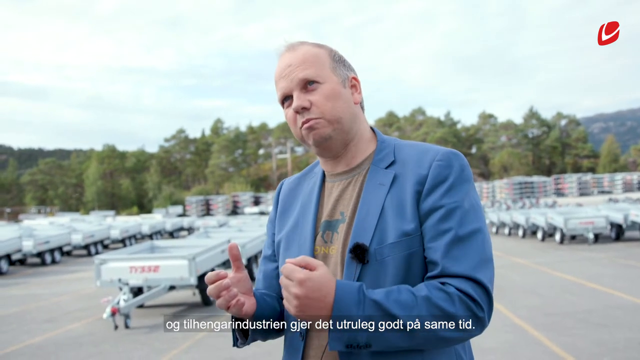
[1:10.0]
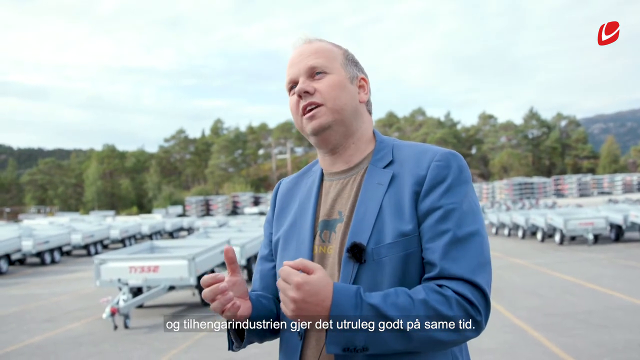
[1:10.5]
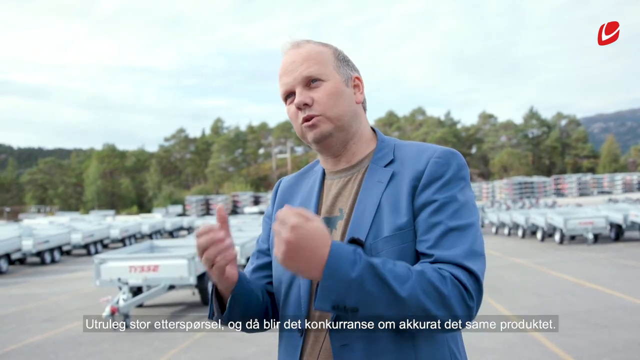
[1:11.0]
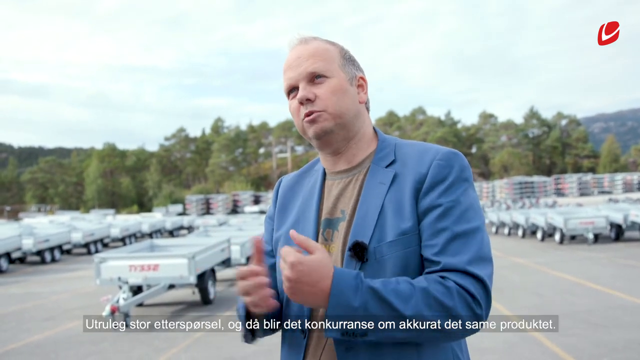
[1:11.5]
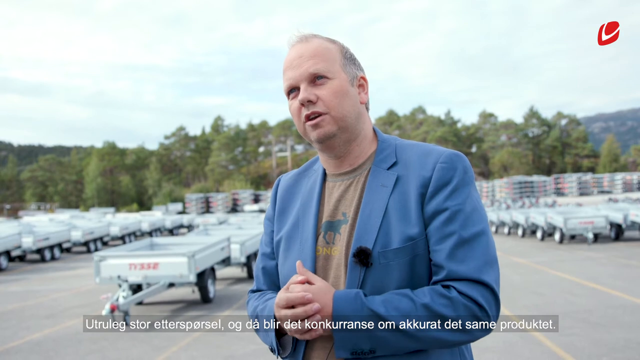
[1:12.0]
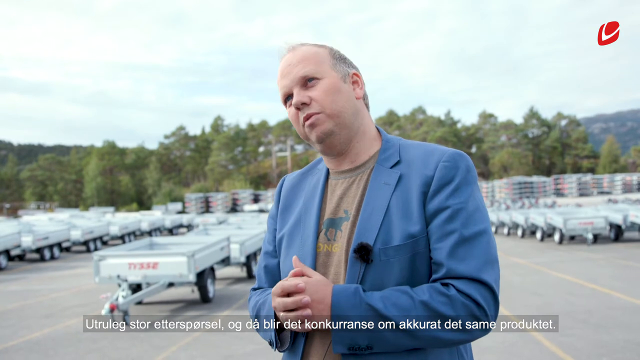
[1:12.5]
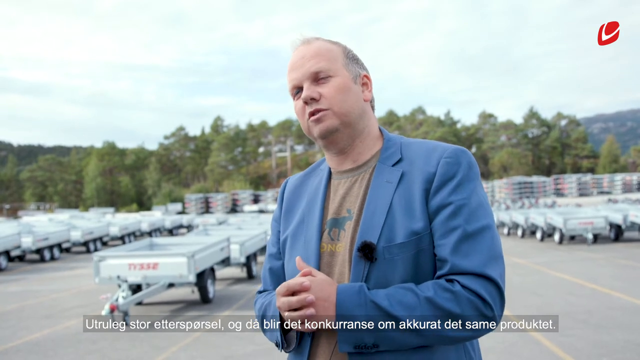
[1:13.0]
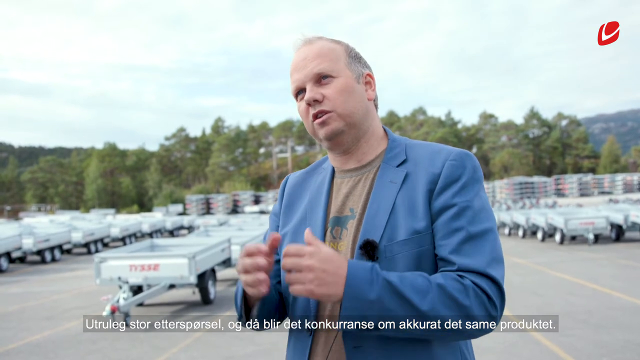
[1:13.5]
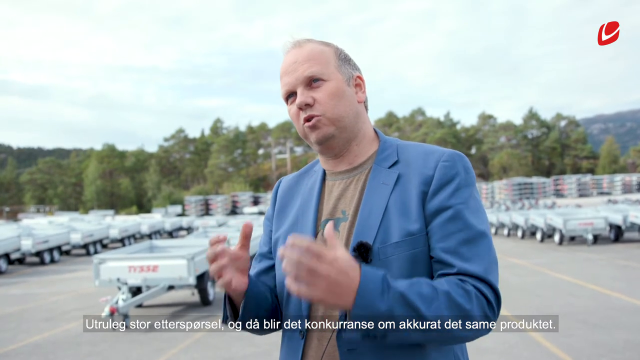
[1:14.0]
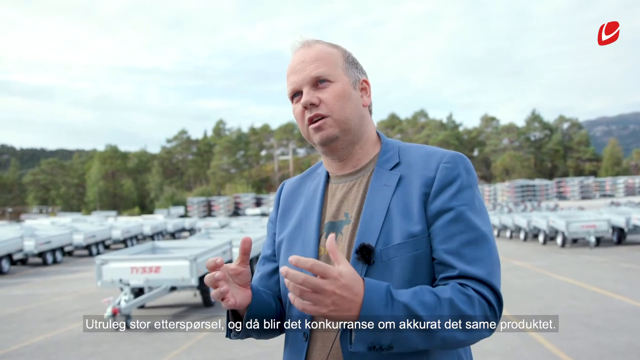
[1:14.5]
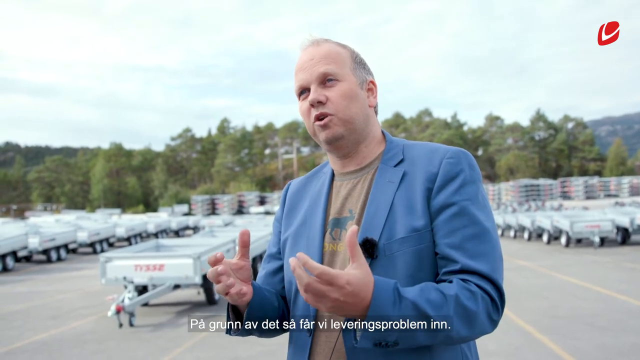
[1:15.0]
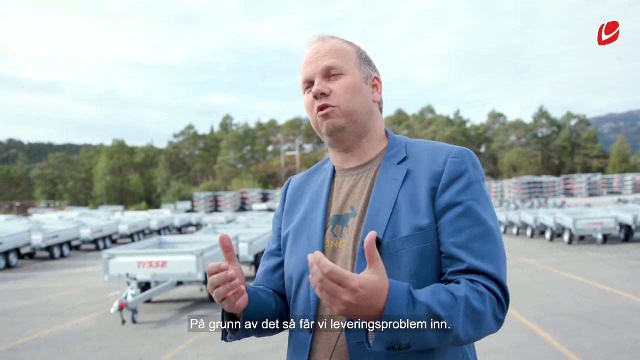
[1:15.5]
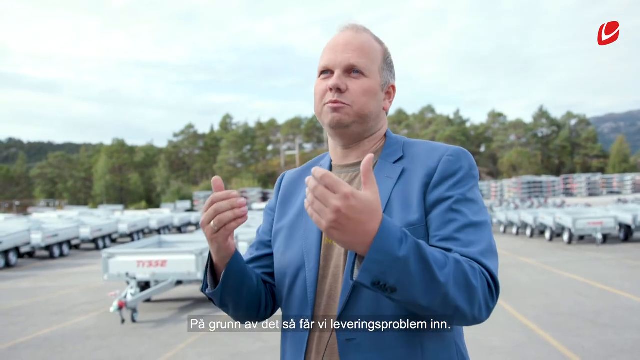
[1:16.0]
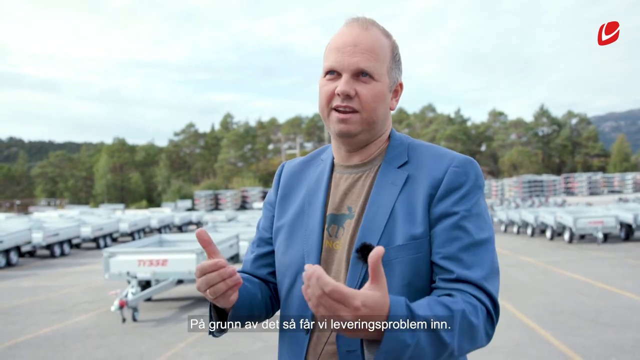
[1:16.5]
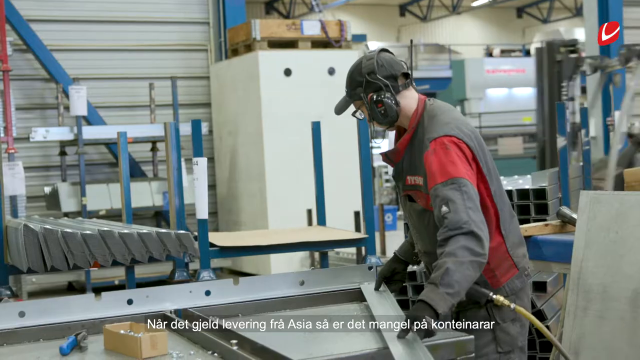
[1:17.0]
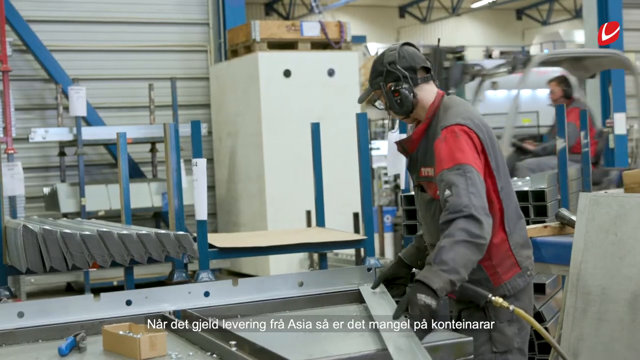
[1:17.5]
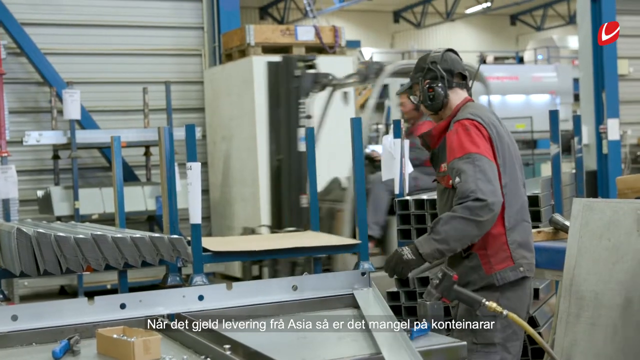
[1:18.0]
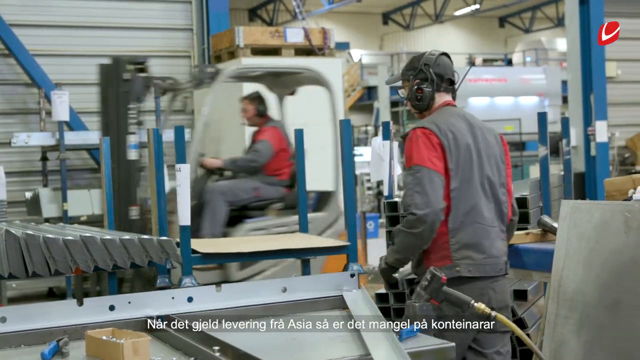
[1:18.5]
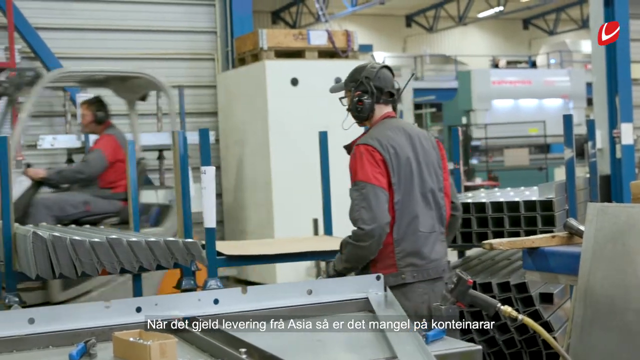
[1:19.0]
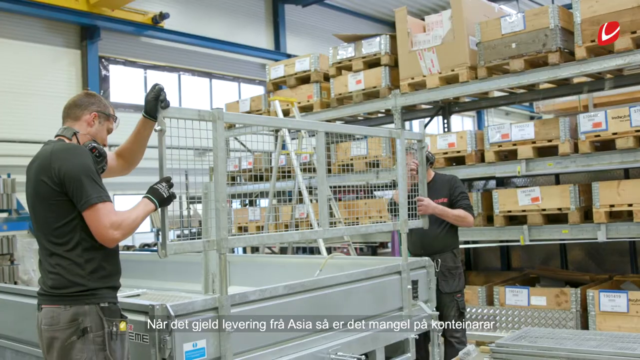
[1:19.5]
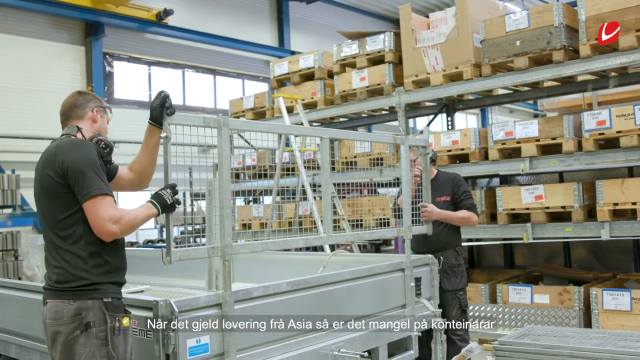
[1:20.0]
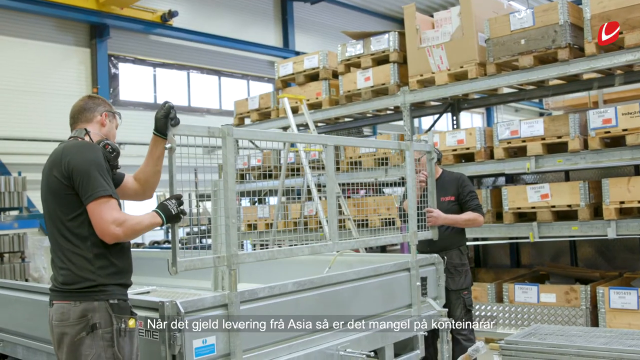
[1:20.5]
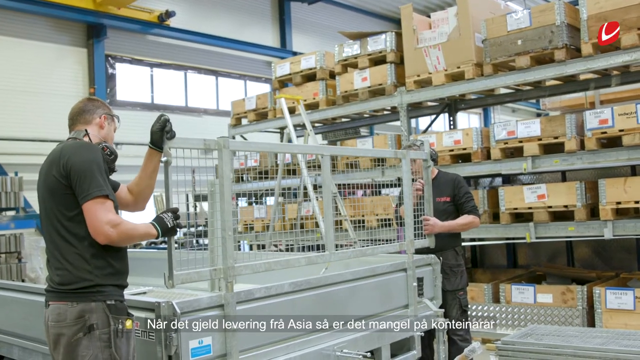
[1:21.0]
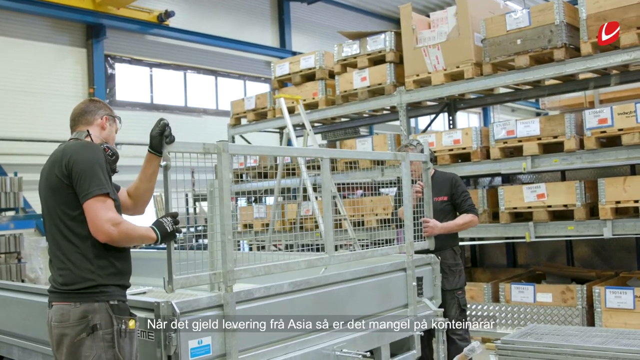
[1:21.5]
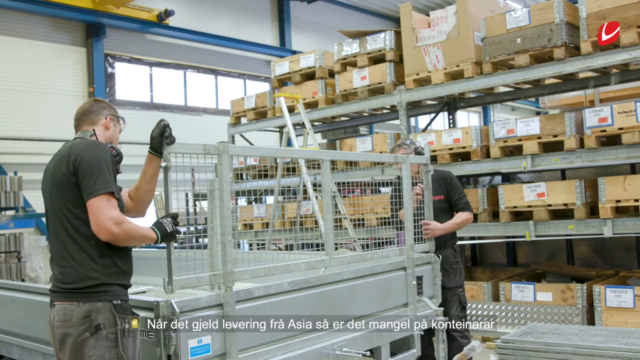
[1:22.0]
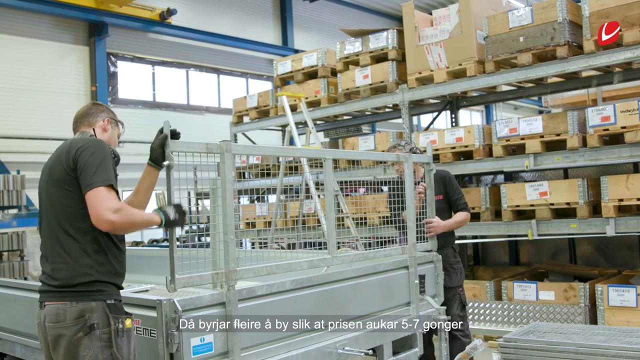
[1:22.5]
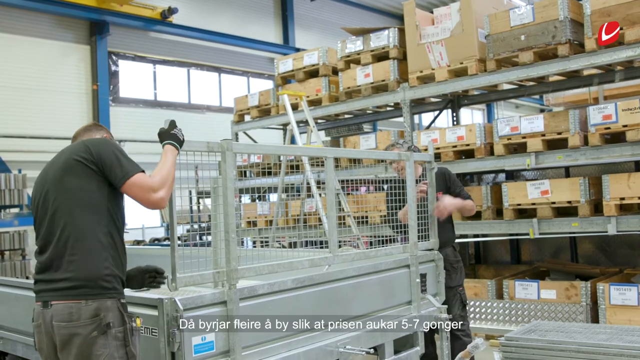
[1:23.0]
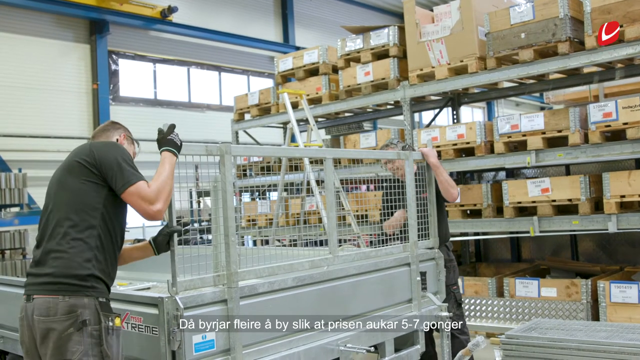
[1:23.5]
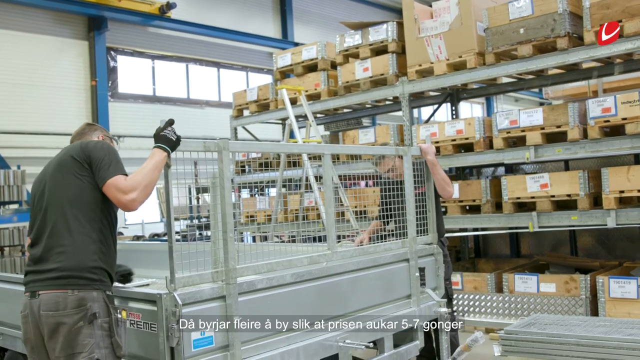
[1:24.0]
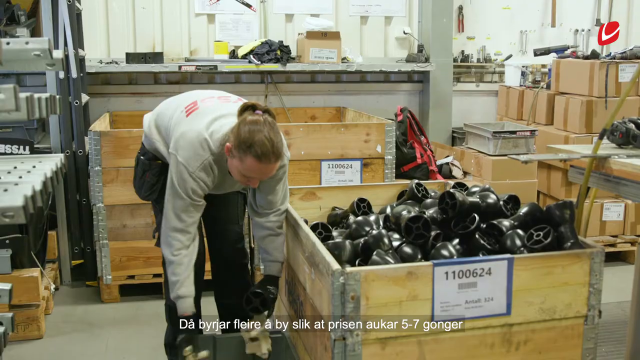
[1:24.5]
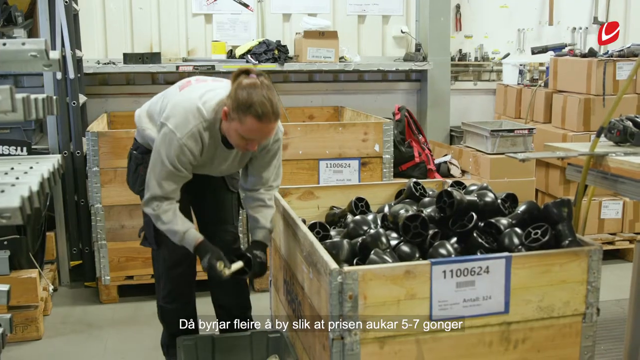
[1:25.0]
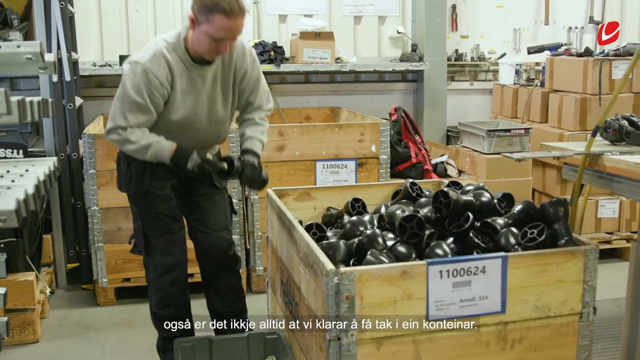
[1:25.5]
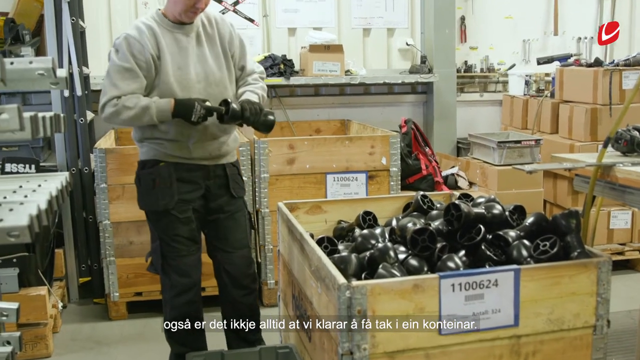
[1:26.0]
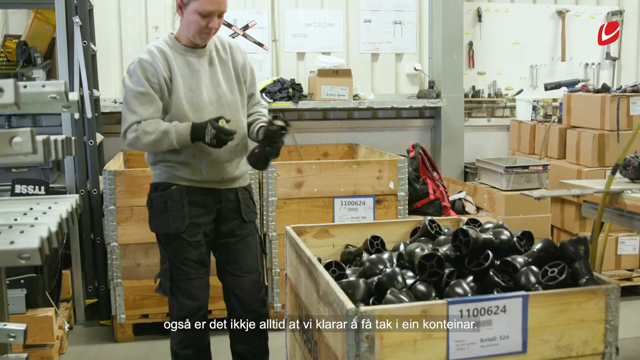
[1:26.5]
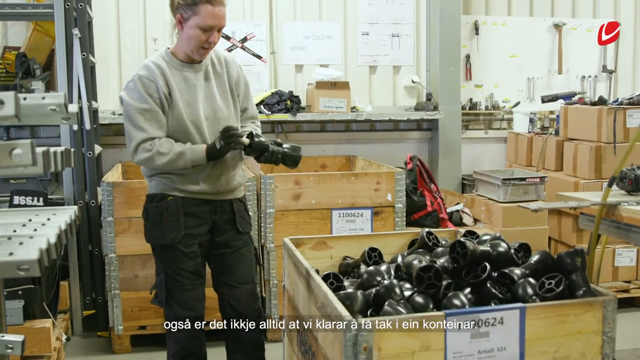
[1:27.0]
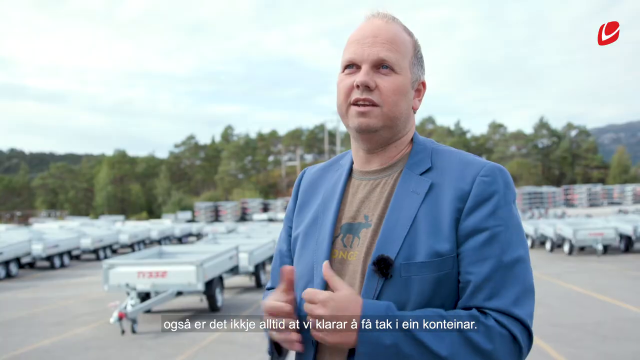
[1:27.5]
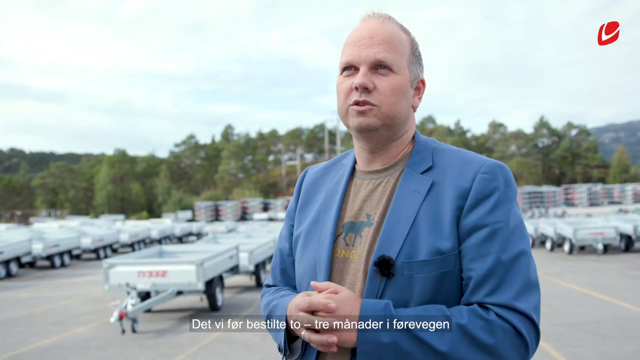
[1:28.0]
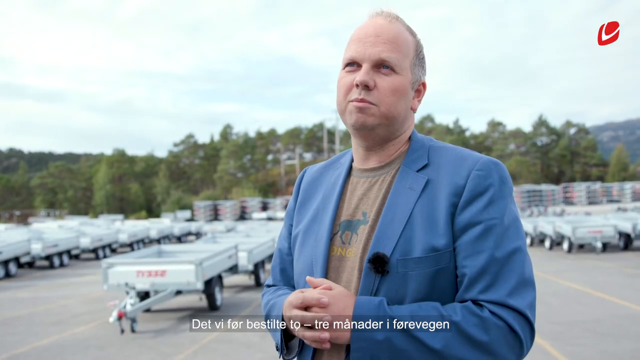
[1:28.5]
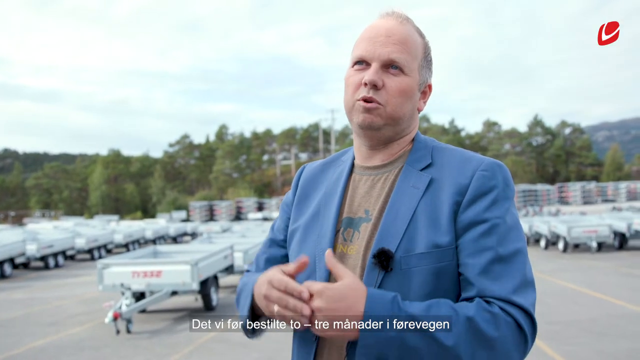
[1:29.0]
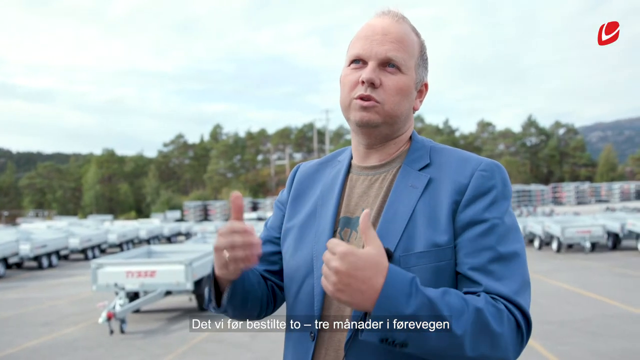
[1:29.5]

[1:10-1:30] The same man, whose hair is either gray or white, has a small fuzzy mic attached to his blazer. He is now outside, where equipment with wheels is lined up, apparently something the company makes; it is unclear what it is, perhaps the end of something that hooks up to a tractor. He talks while moving his hands. The on-screen text is possibly German, and the word "Asia" appears, capitalized.